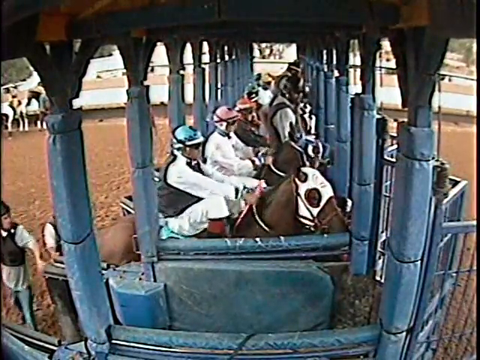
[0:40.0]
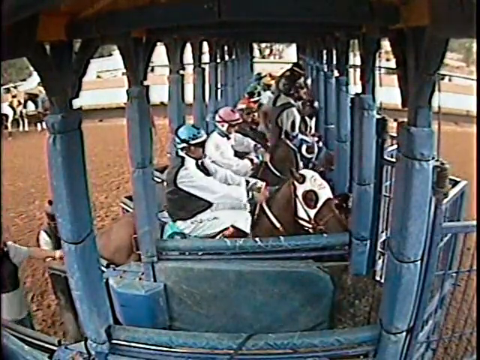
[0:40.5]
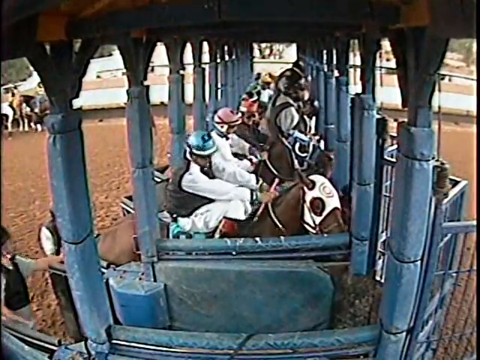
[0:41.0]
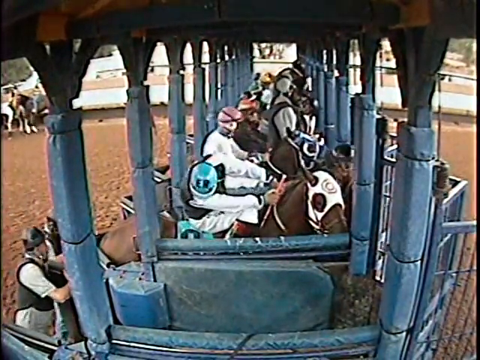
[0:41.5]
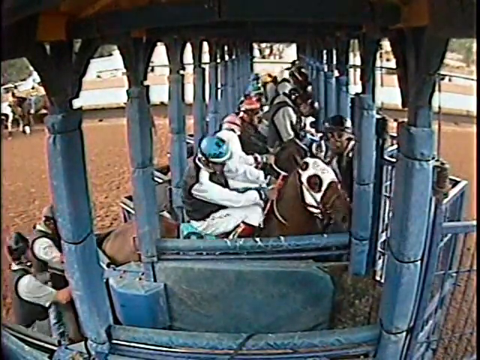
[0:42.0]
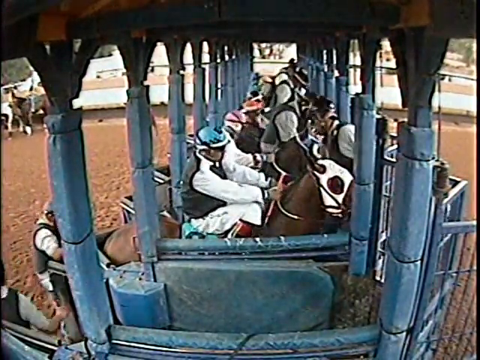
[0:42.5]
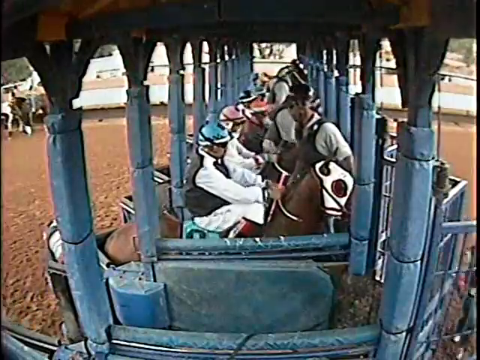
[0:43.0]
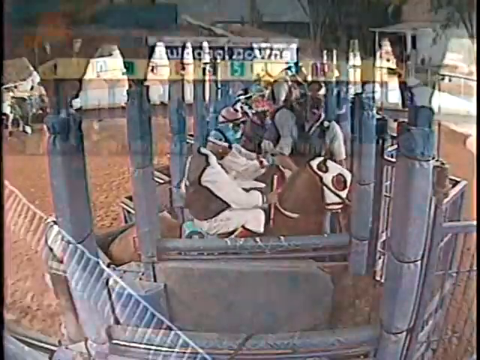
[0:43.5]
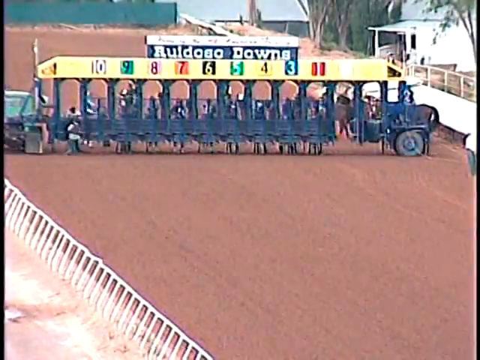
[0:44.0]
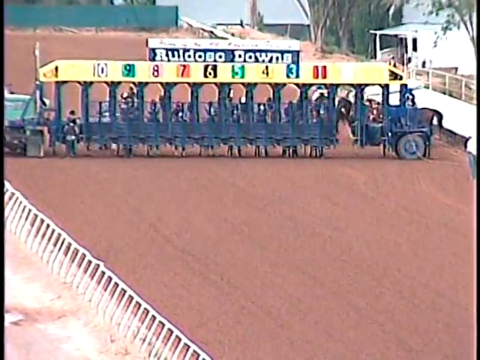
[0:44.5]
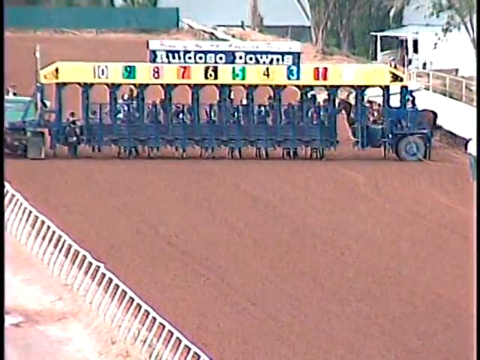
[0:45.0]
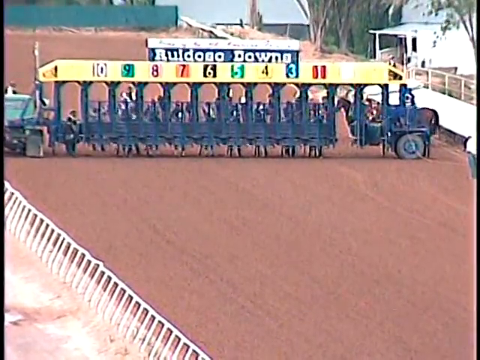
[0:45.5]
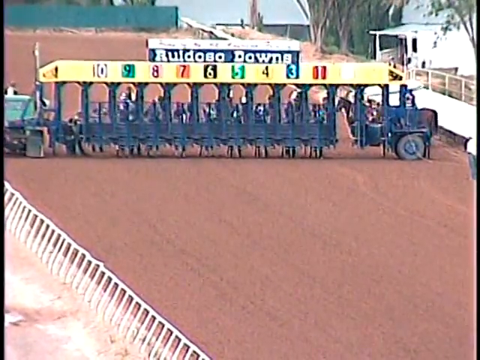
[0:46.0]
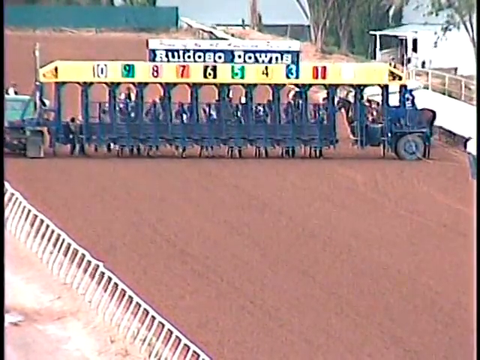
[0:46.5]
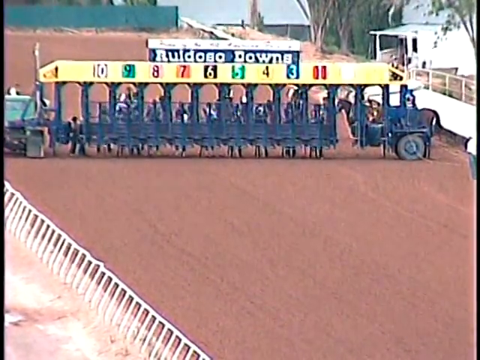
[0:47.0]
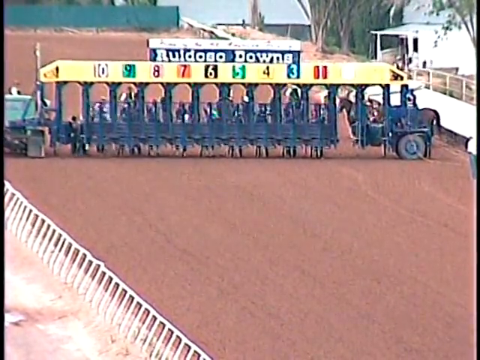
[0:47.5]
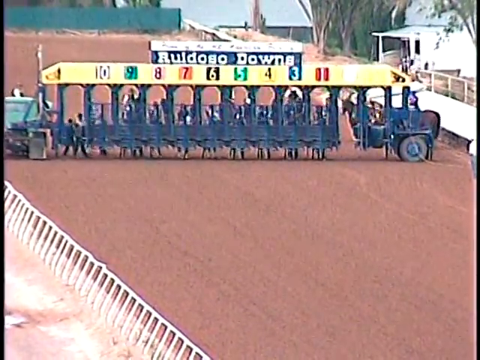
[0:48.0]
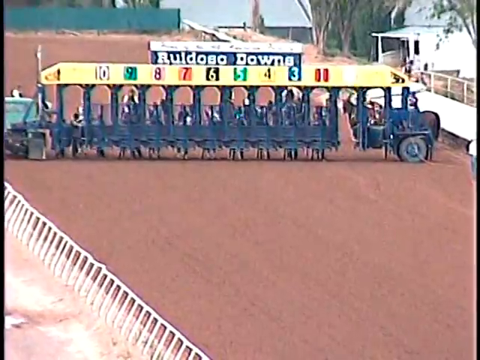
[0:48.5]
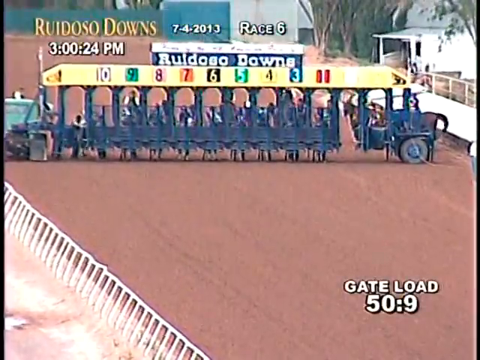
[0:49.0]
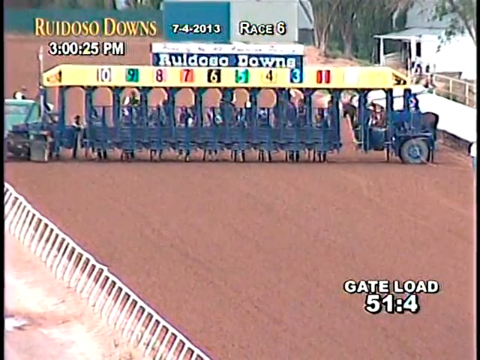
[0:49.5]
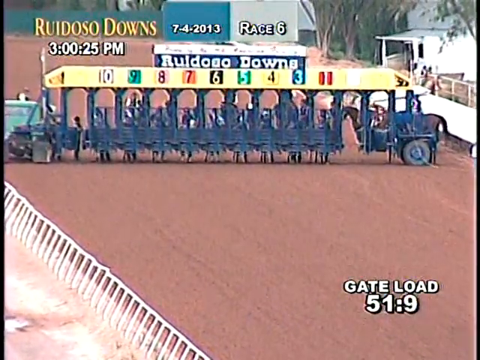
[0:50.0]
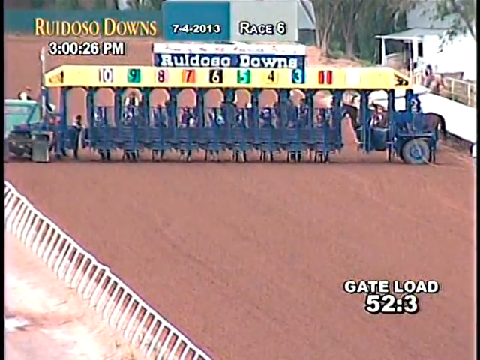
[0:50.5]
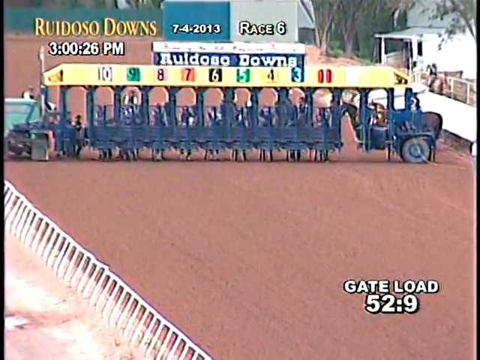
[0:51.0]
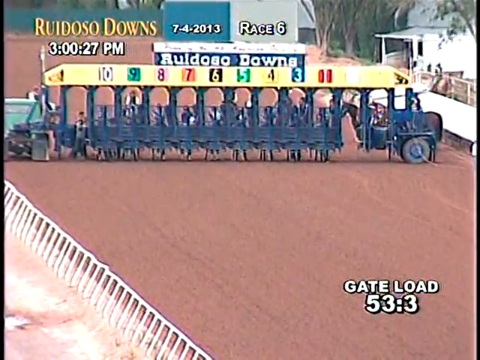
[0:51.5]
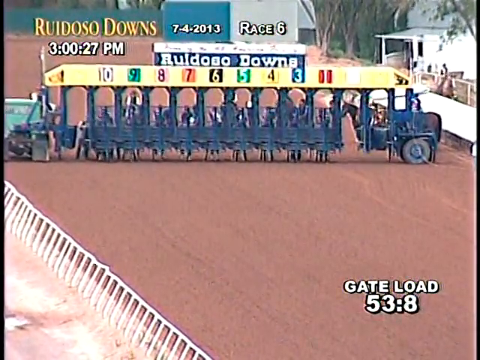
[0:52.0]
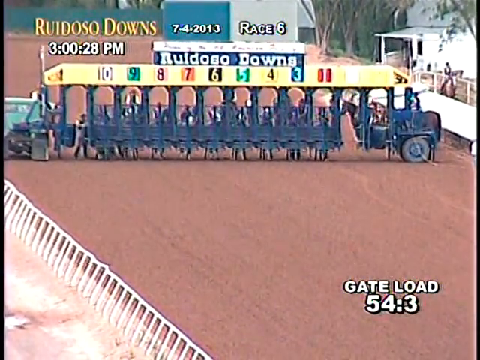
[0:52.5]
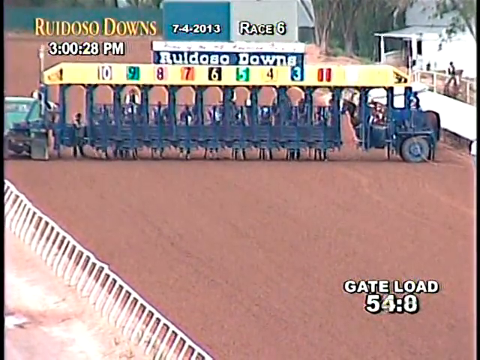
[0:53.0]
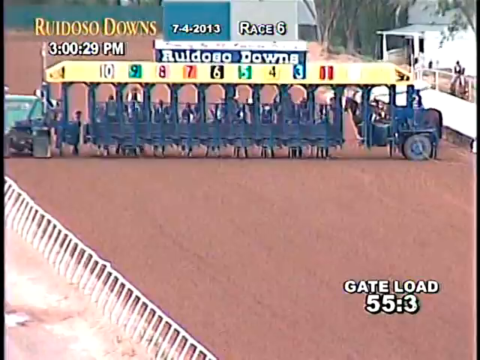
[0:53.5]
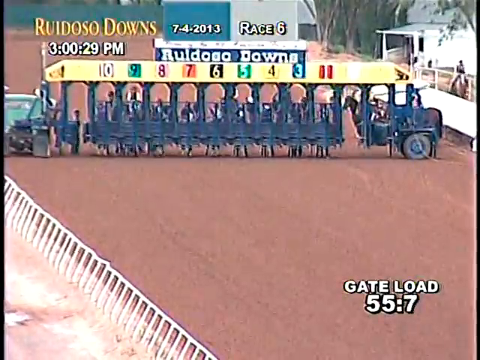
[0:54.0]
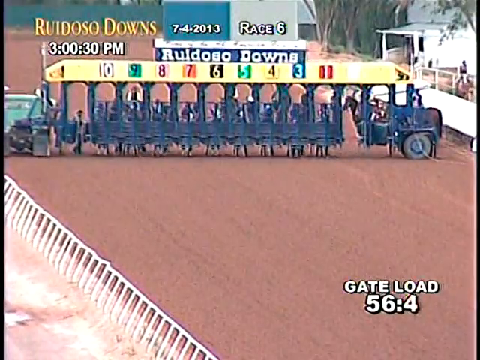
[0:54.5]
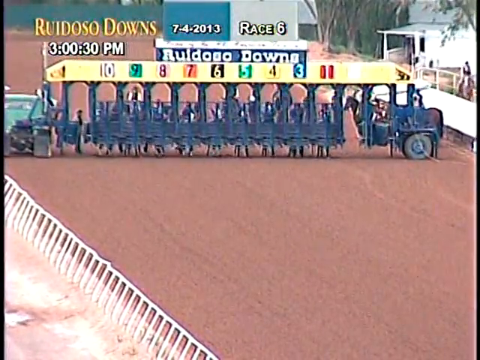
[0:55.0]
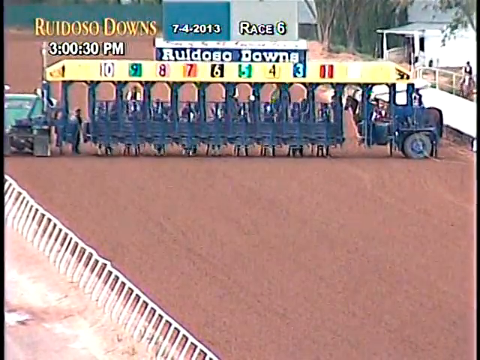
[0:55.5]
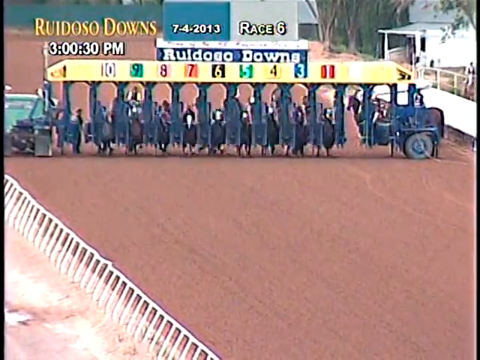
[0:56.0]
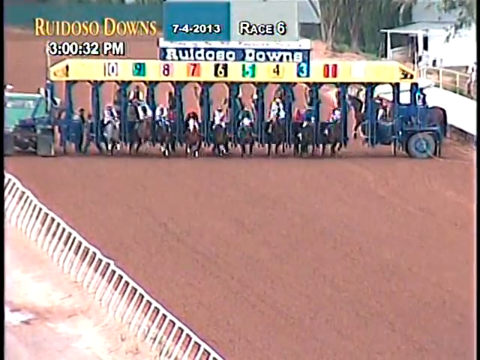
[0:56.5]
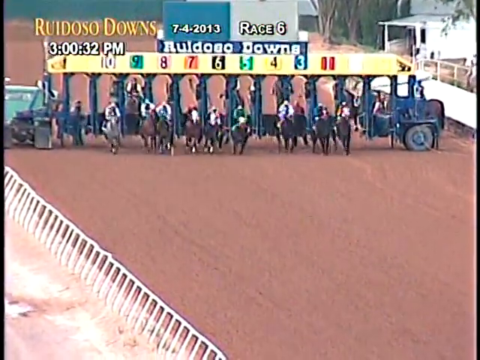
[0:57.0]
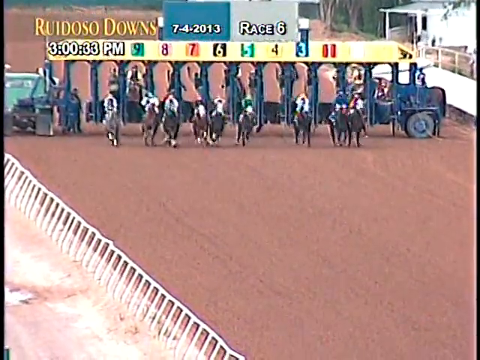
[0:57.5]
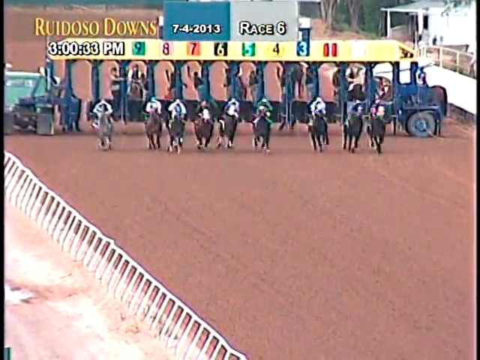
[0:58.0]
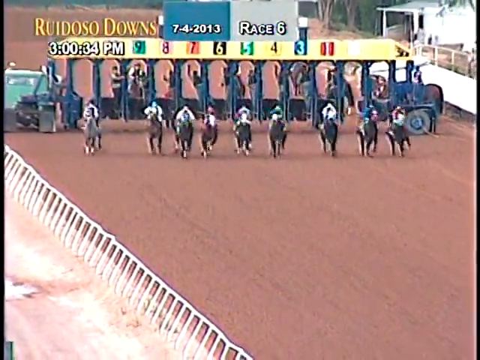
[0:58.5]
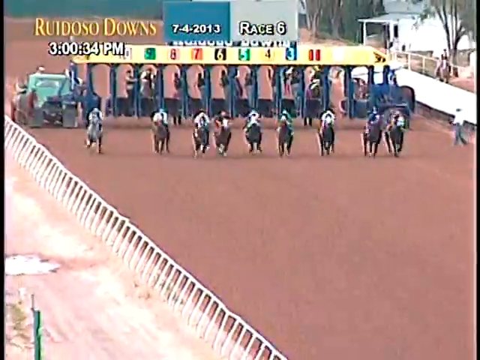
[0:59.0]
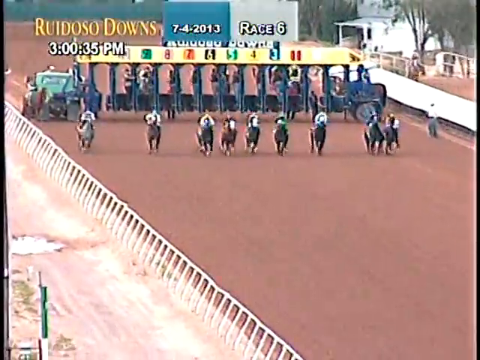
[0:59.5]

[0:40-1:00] The grainy, out-of-focus, unclear footage appears to show the starting gate of a horse race. On the left side, some people dressed in gear mill about a dirt track. The camera is positioned to look directly down the length of the starting gate stalls, which are all filled with jockeys on their horses preparing for the start of the race. The starting gates the horses will run out of are on the right side. The structure looks to be a sort of slate blue color. In the background there are white stands where spectators may be, though they cannot really be seen because it is out of focus. The horses are anxious, moving around in their stalls. The framing then changes, showing that the starting stall structure is sort of on wheels, with what looks like a truck motor or the front of a bus in front that would pull it onto the track. The stalls are labeled 1 through 10, with 10 on the left side. The horses move about. Text on the screen reads "Ruidoso Downs, 7-4-2013, race 6, 3 p.m., gate load 51-9". The gate load timer goes up, the gates open, and the horses sprint out down the dirt track.